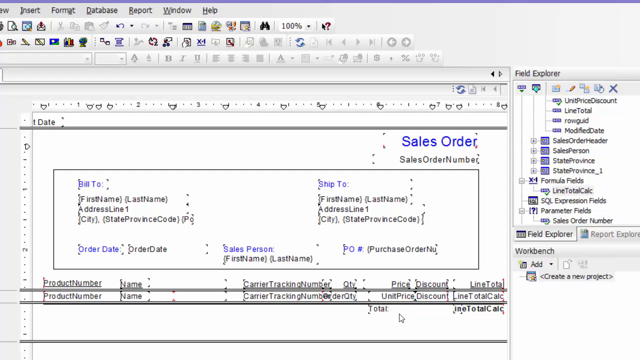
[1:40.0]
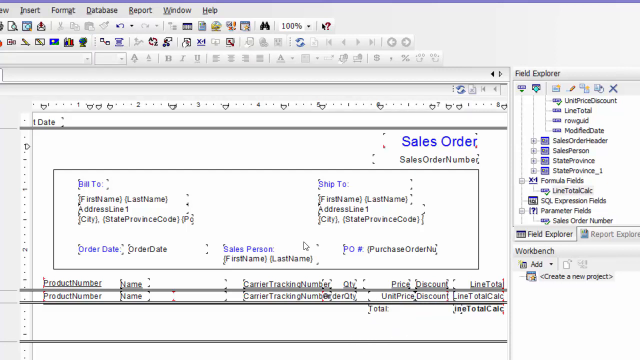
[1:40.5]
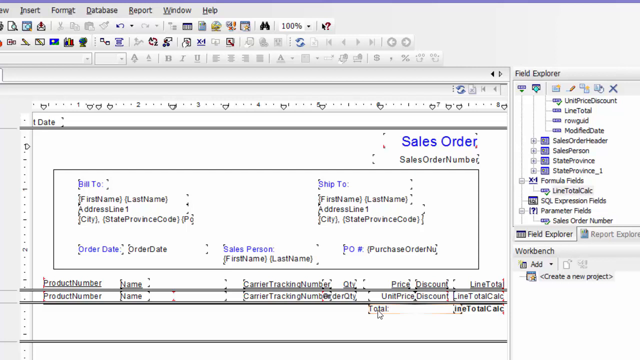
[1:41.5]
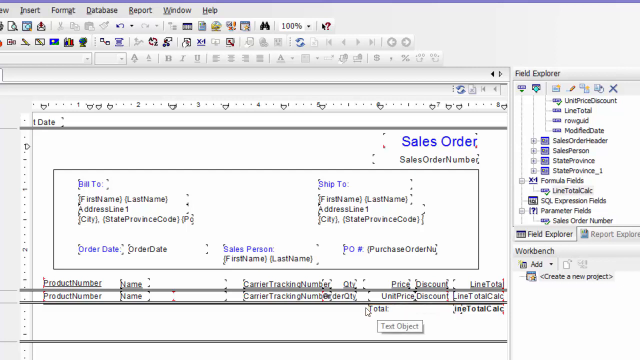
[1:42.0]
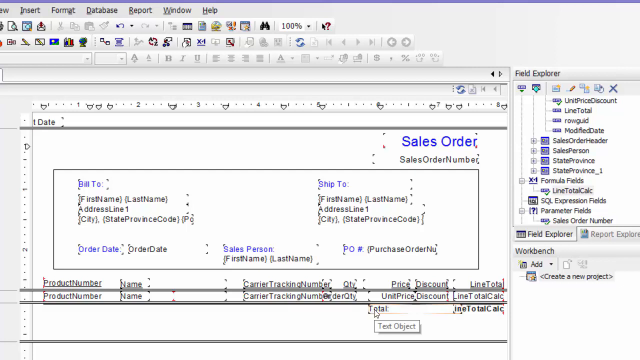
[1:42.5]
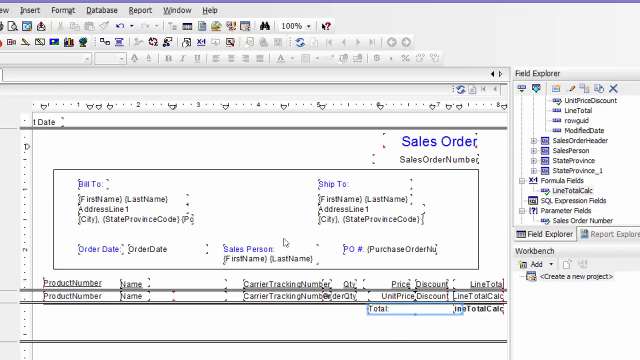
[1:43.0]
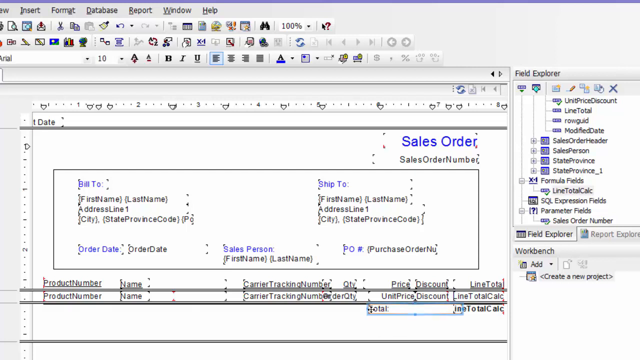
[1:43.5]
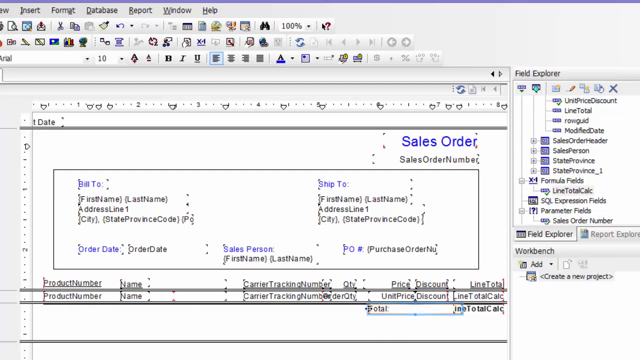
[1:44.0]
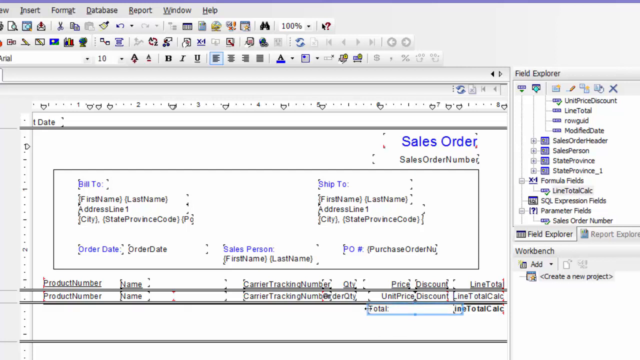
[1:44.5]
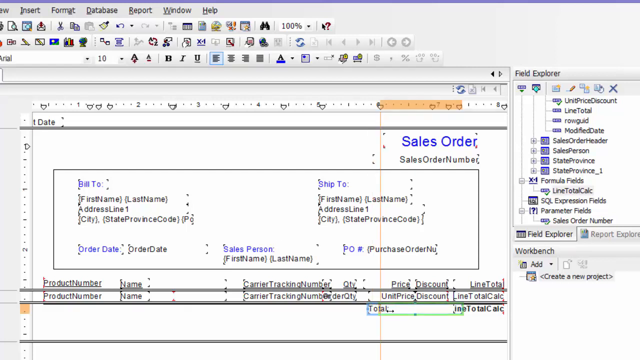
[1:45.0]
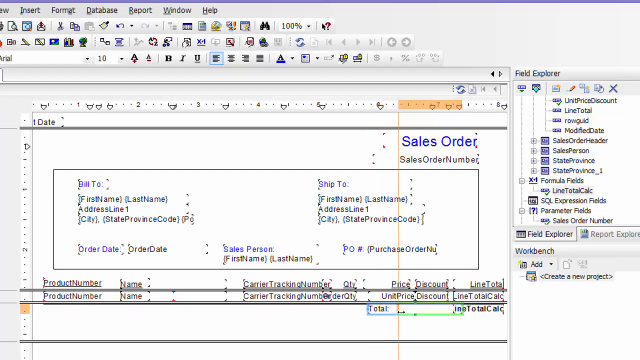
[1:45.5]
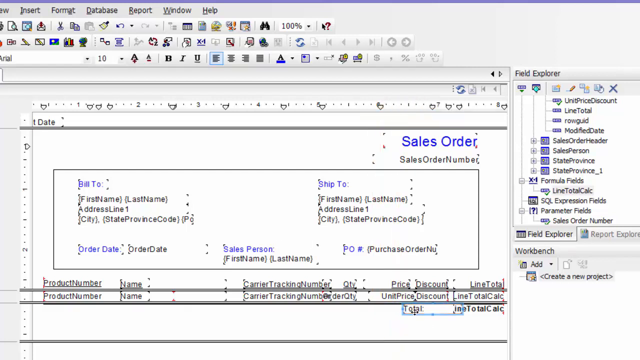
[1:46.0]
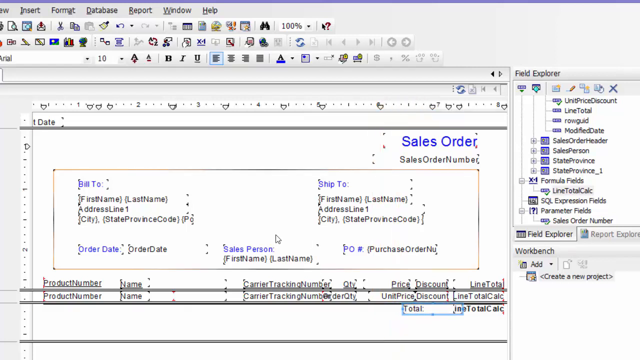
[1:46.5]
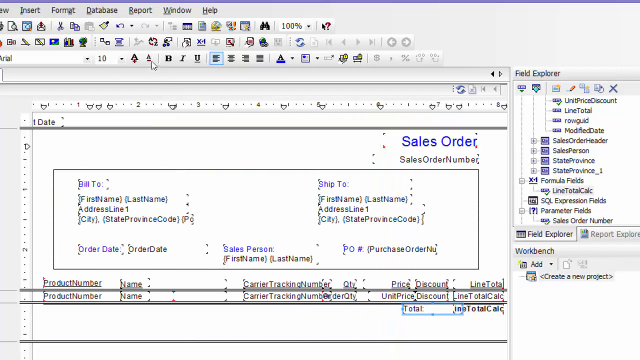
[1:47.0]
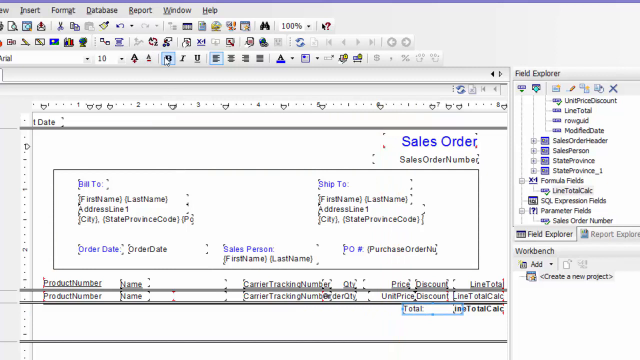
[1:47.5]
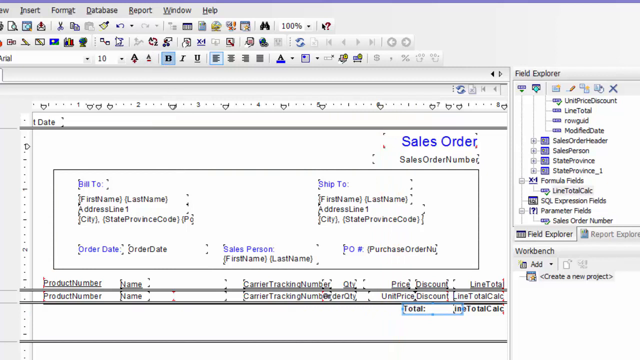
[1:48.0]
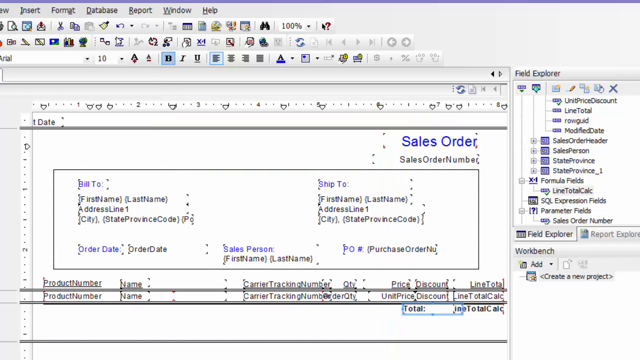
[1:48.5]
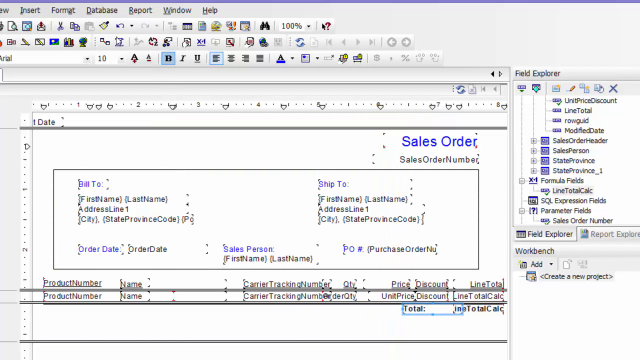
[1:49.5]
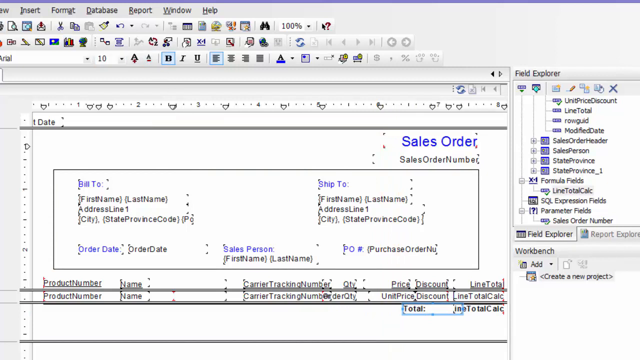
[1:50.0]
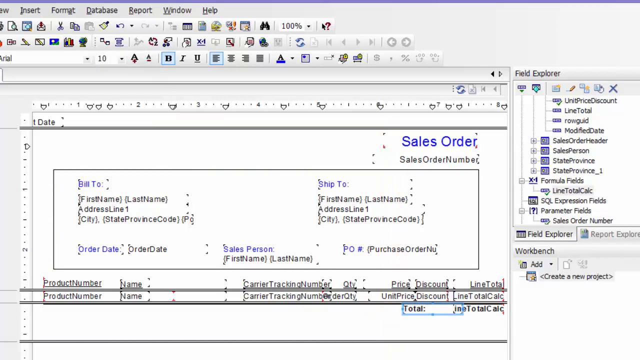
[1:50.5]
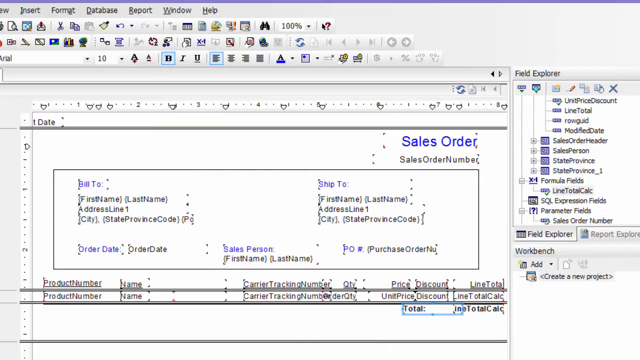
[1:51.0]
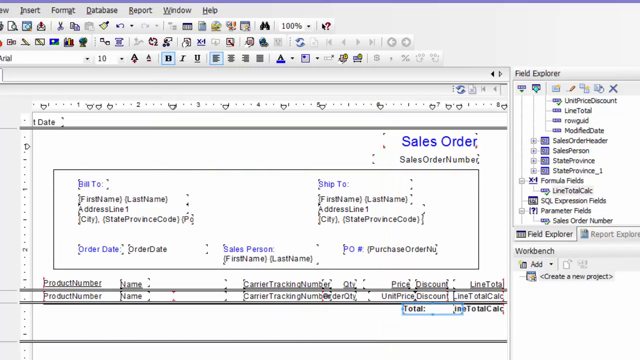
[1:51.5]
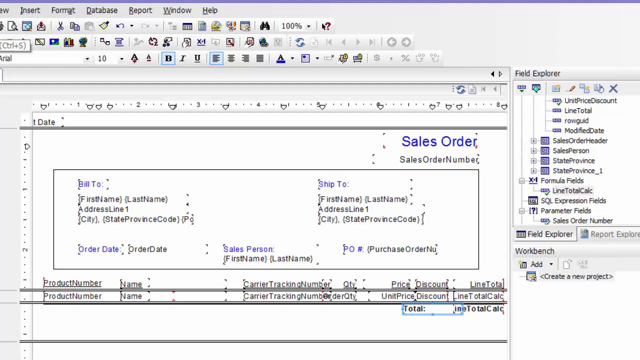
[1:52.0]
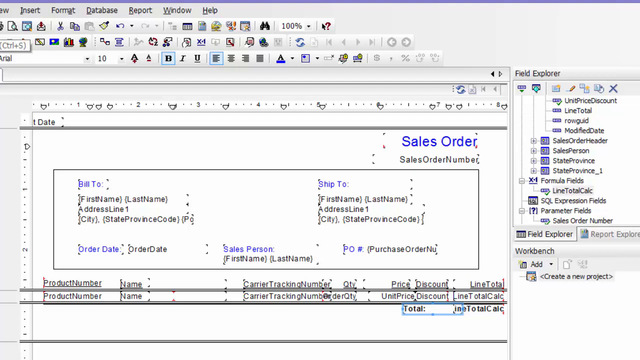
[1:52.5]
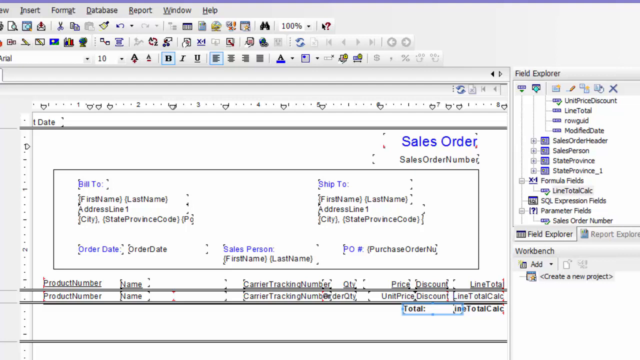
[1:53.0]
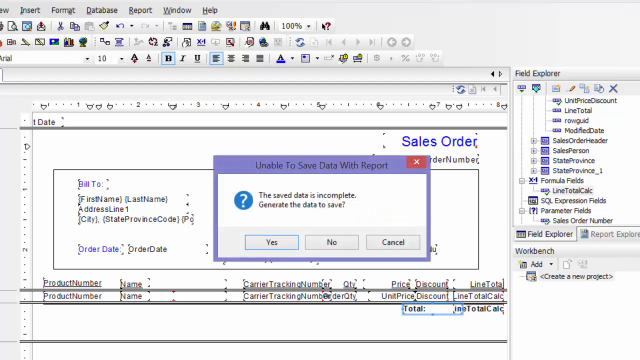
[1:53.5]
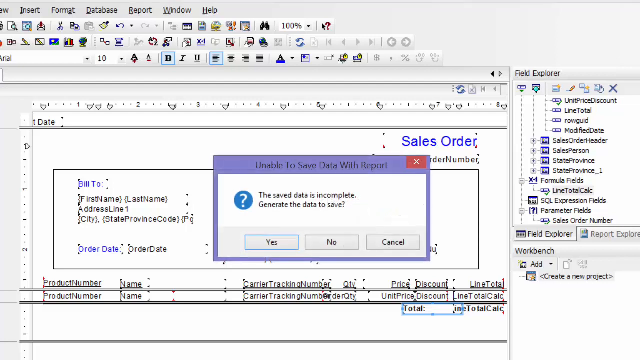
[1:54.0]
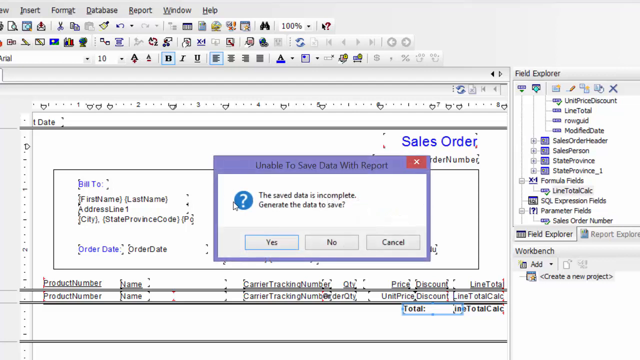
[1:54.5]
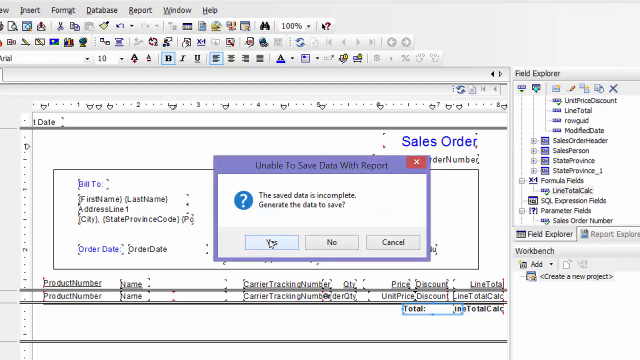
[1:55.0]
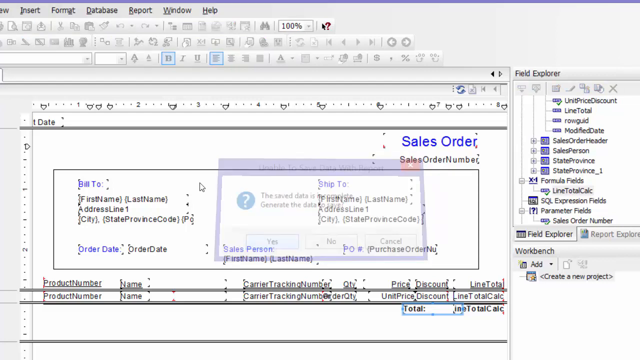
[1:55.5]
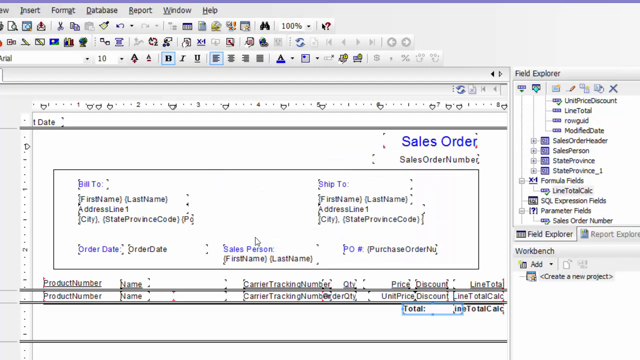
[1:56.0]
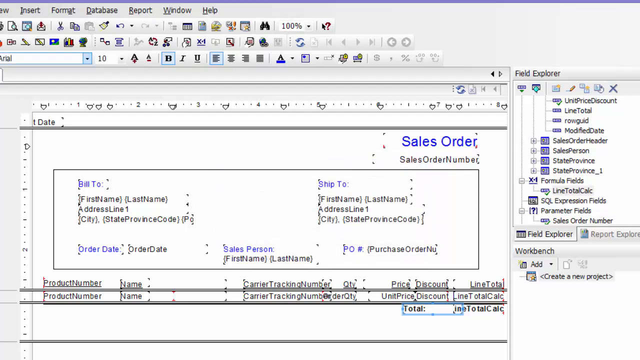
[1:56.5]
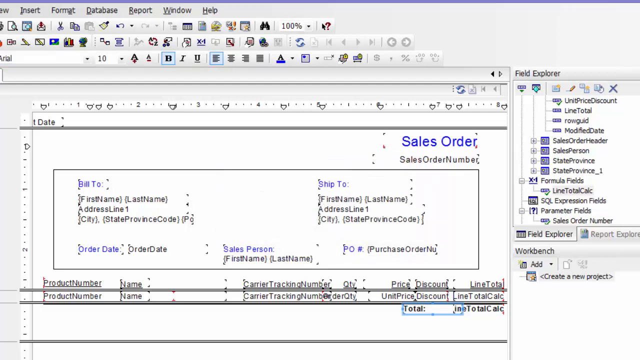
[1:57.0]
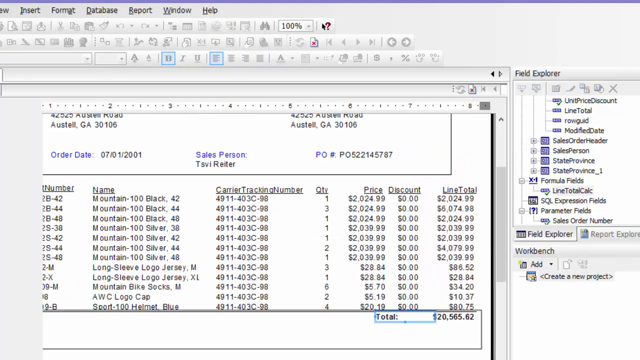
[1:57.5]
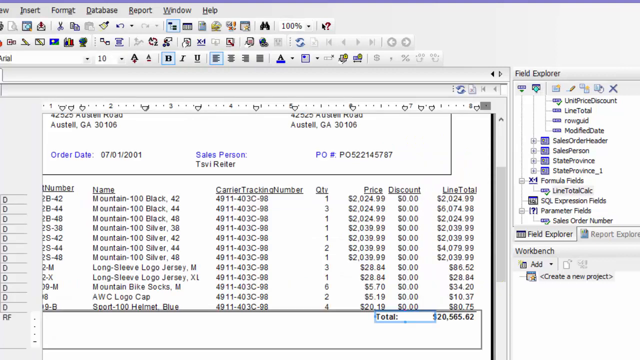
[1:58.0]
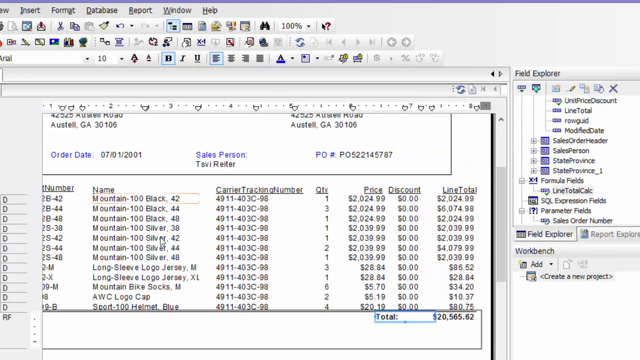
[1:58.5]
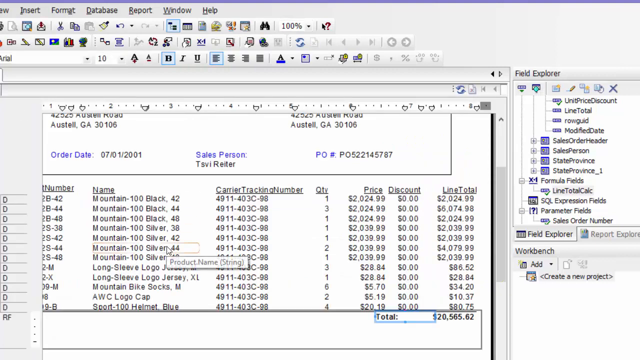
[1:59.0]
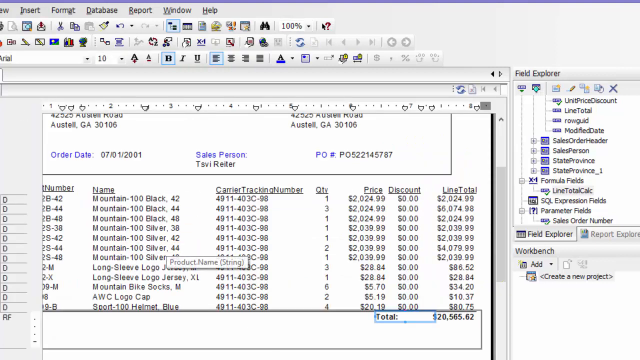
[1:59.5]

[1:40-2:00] In the text formatting box containing "Total", the user appears to click the left side of the box to resize it. A faint vertical line runs along the right edge of the box as they increase and decrease it, and an orange highlighted part appears above on the ruler. They click off, having made the box a little smaller. They go up with the cursor and appear to click the bold button, which turns into a light blue box to show that the option is selected. The left indent is also highlighted. They click something at the top that is cut off; the file menu is cut off. A message says "unable to save data with report" with a red X and options for yes, no or cancel. They click yes. A column of D's then appears on the left side, with gray lines above each of them, and the very last entry says "RF".